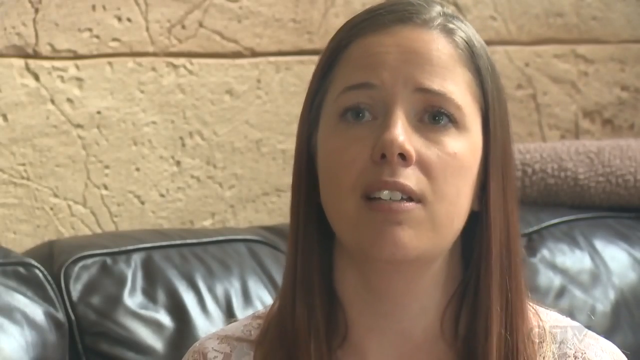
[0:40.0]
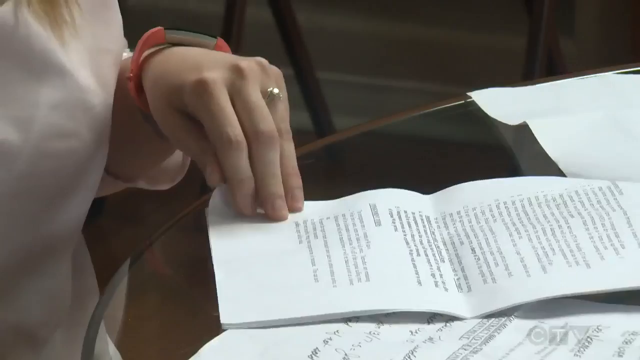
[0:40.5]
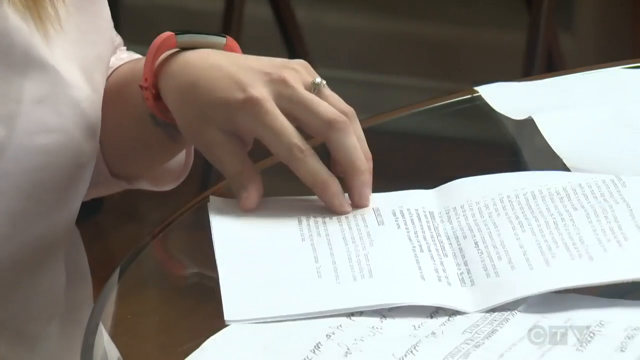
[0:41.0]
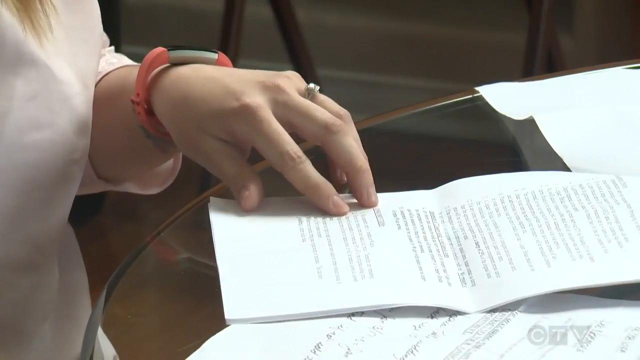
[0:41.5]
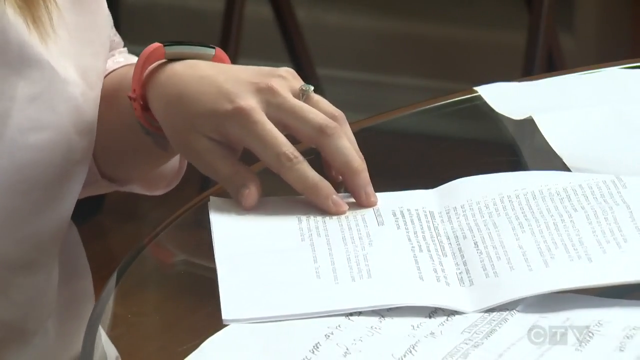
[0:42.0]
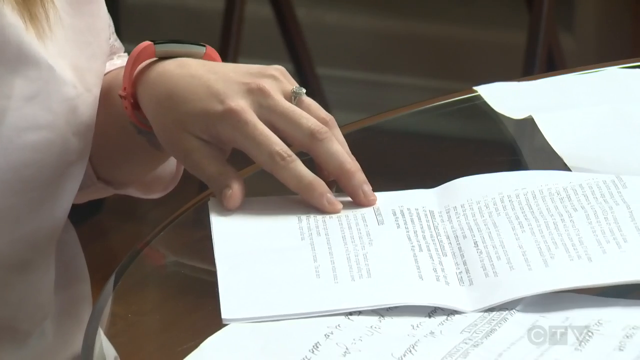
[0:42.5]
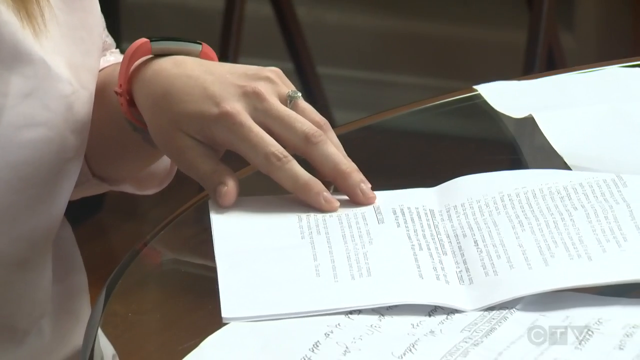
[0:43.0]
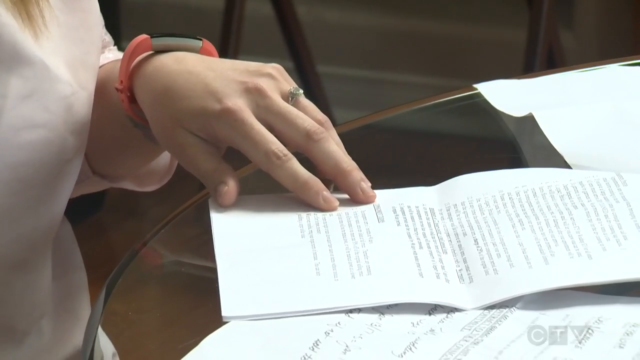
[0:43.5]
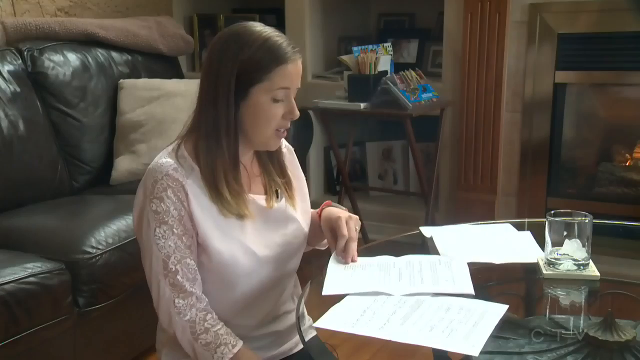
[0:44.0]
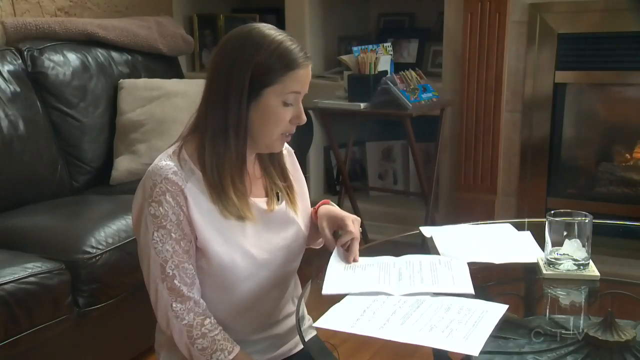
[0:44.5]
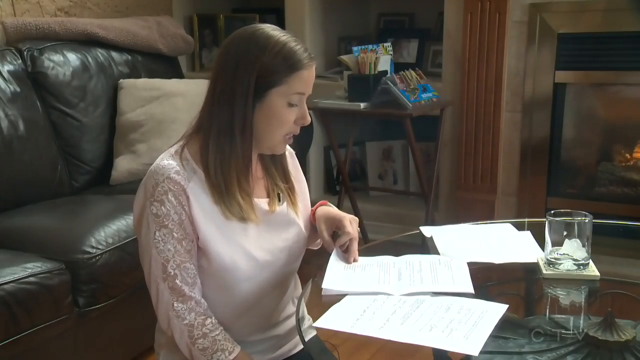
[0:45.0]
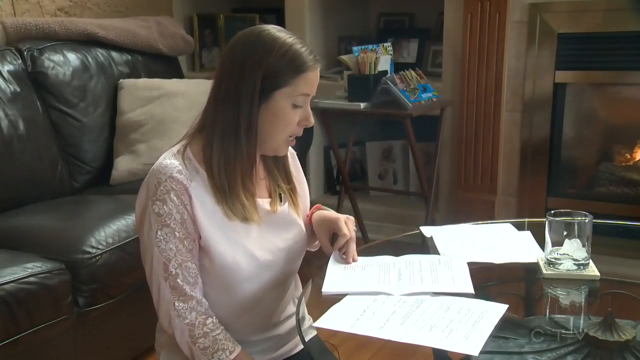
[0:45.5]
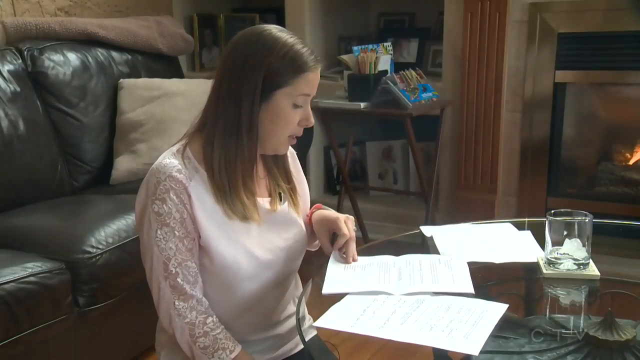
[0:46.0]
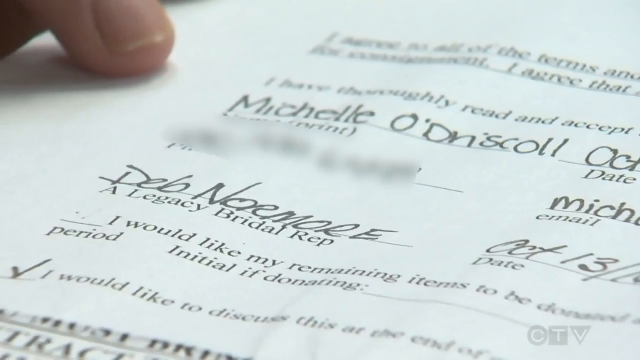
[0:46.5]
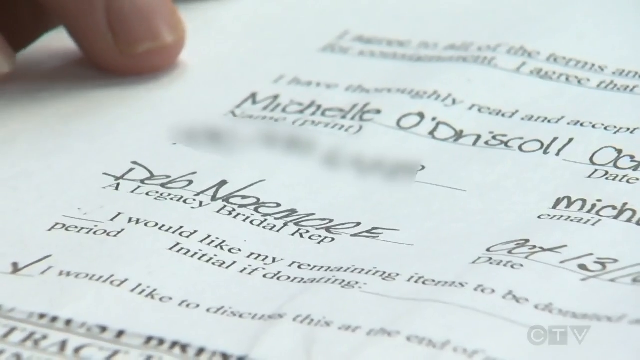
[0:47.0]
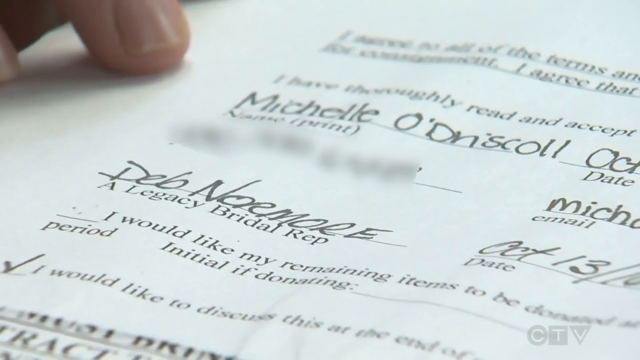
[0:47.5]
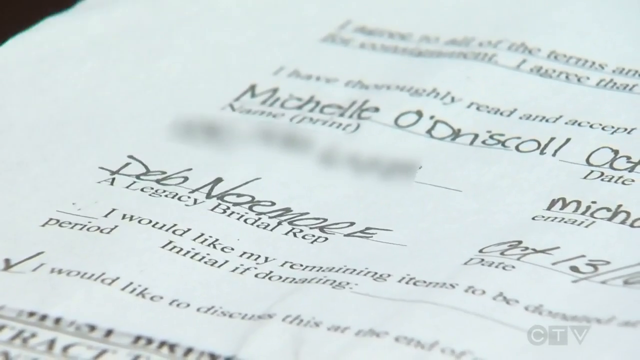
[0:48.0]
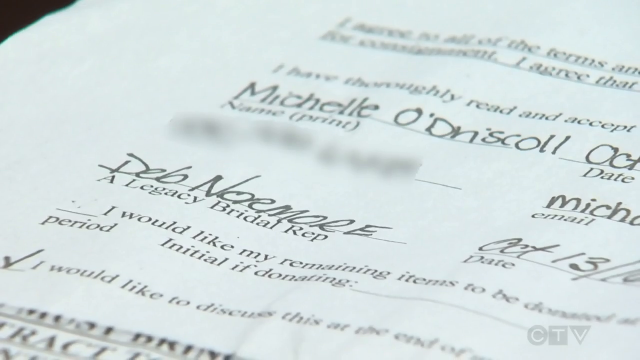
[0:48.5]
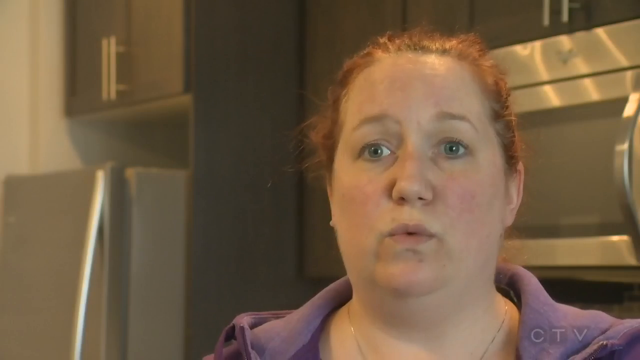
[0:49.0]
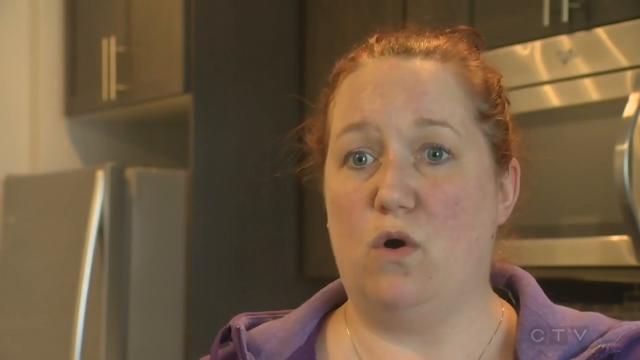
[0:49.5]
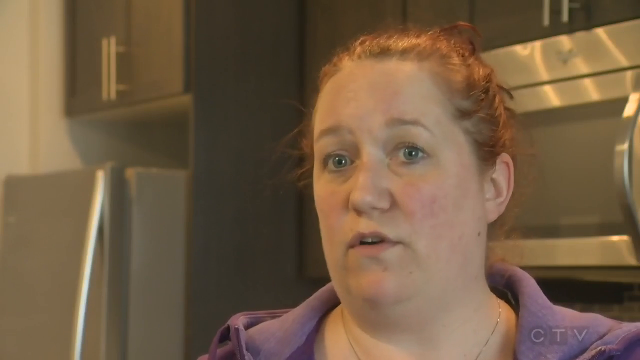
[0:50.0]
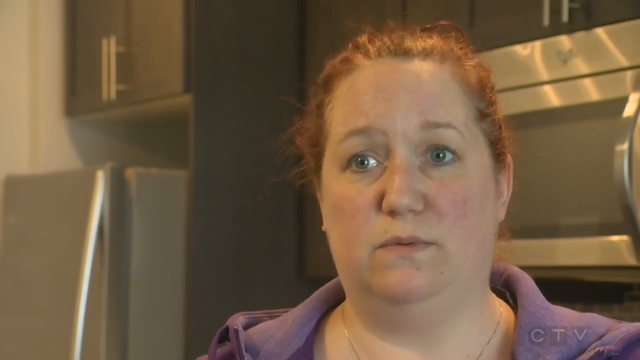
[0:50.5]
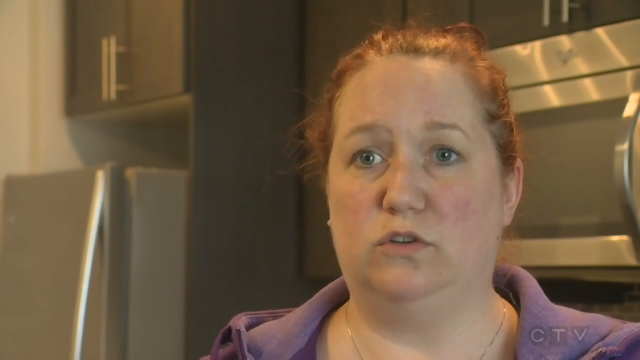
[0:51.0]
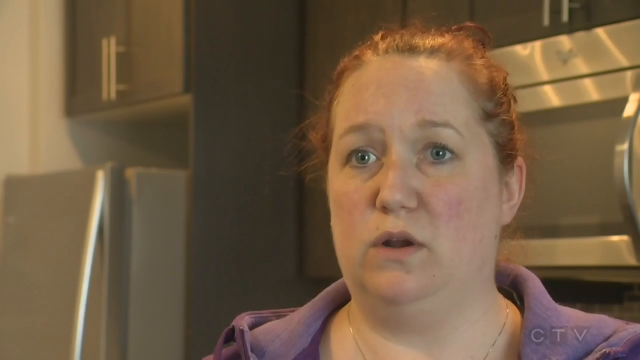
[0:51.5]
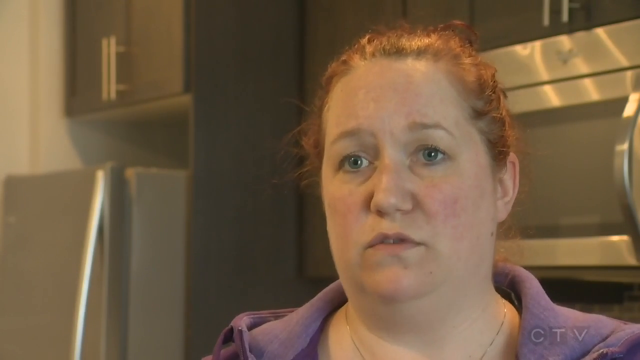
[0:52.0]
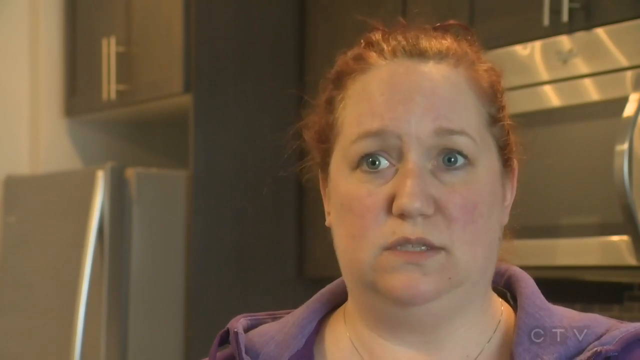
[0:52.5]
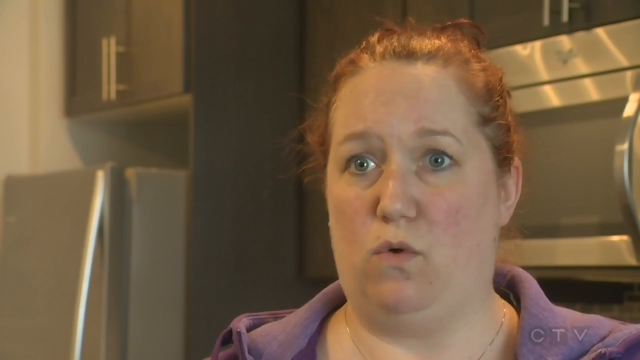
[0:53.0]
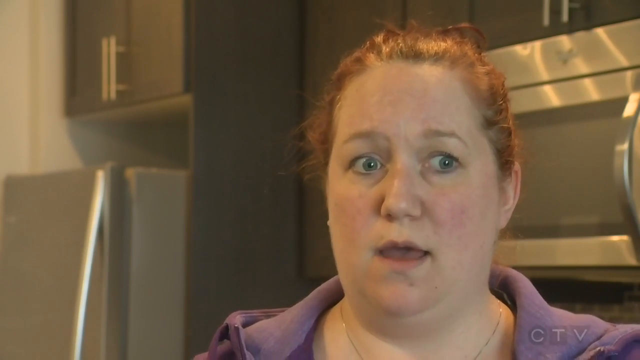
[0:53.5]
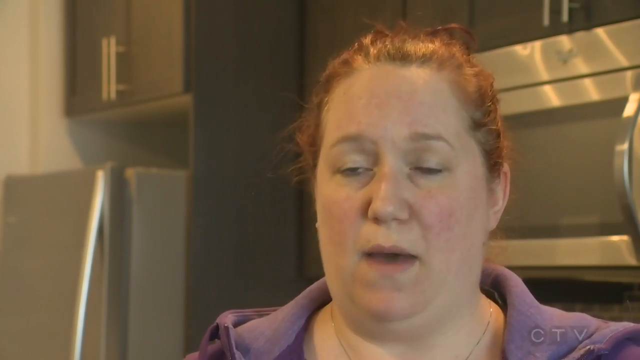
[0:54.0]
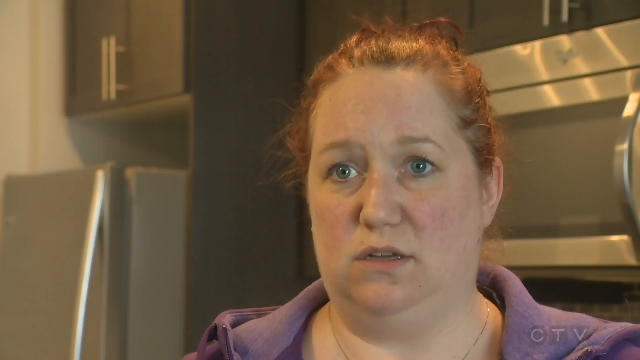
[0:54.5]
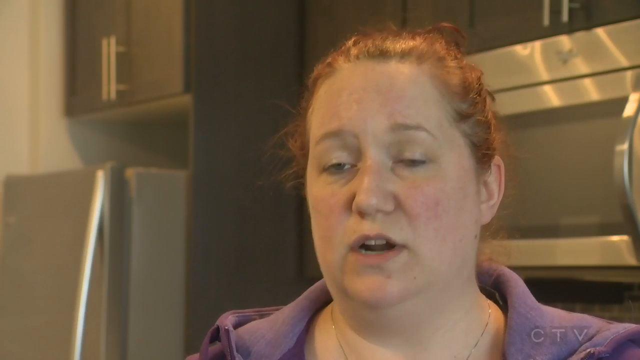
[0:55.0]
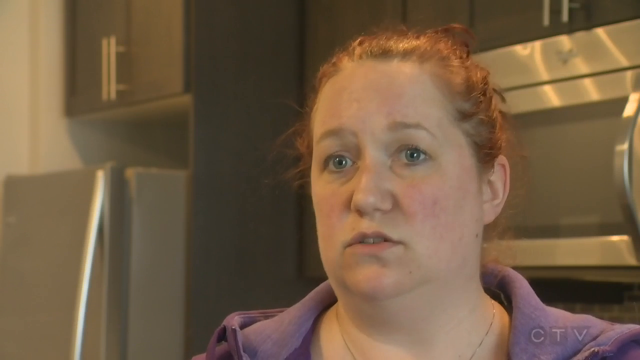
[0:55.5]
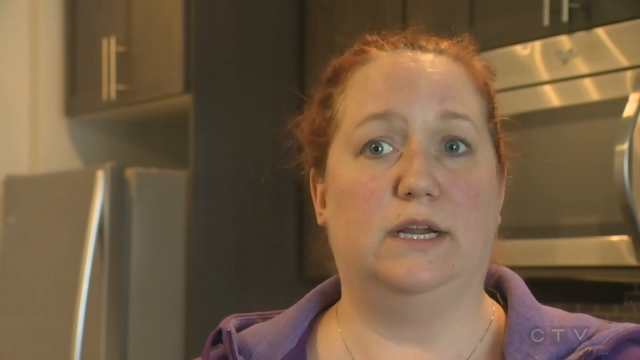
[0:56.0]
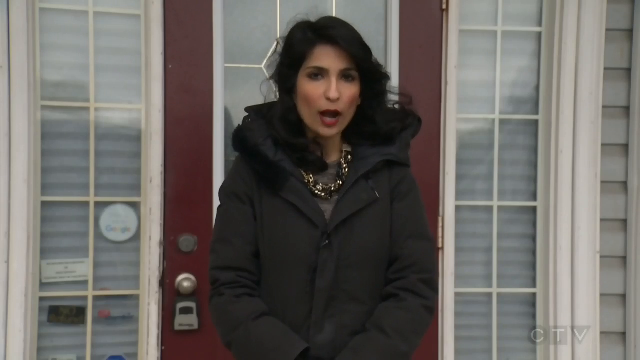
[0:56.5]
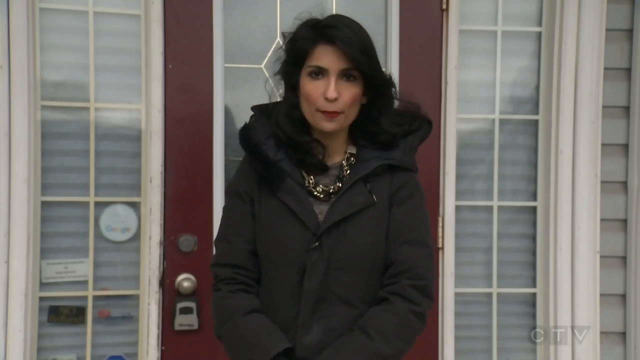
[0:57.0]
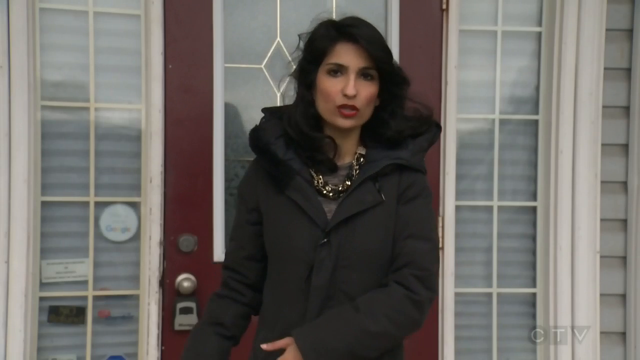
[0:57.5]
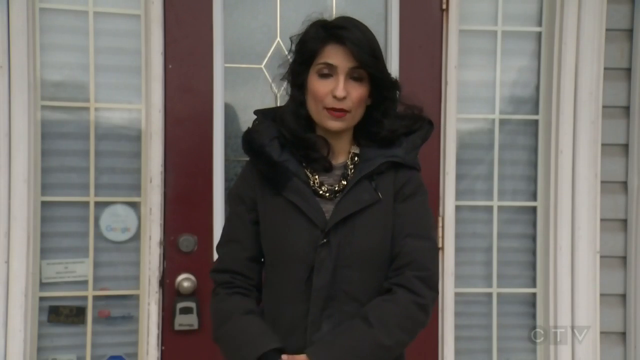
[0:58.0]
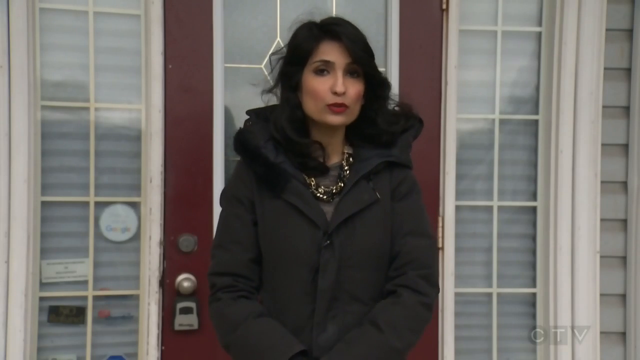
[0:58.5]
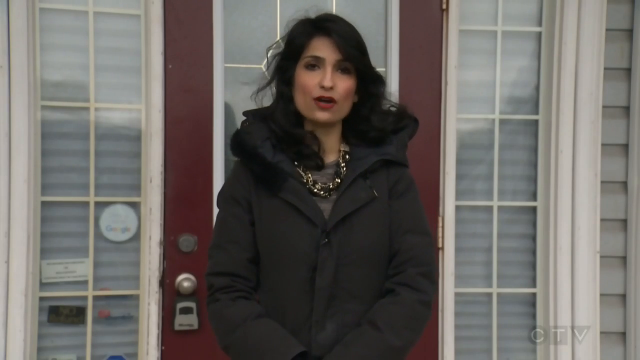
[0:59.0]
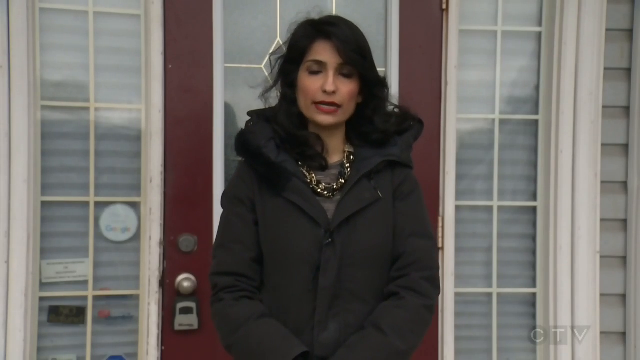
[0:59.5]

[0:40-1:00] A brunette woman with straight hair sits on a leather couch, talking very seriously at the camera. A woman with blonde hair looks over paperwork with a serious expression; the contract from Legacy Bridal is visible. Another woman, who seems to be in a kitchen, has her hair pulled up and also looks very upset. What appears to be a news correspondent stands in front of the red door of a shop, wearing a black coat and jewelry, with wavy black hair. She looks very serious as she talks in front of the building. All of the women seem very serious and upset.